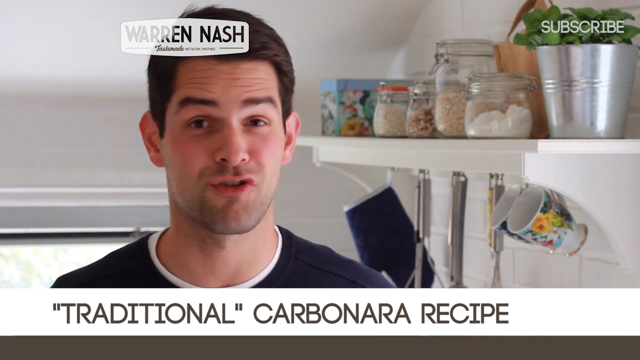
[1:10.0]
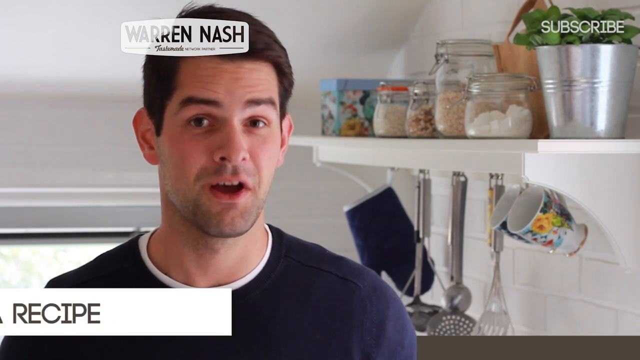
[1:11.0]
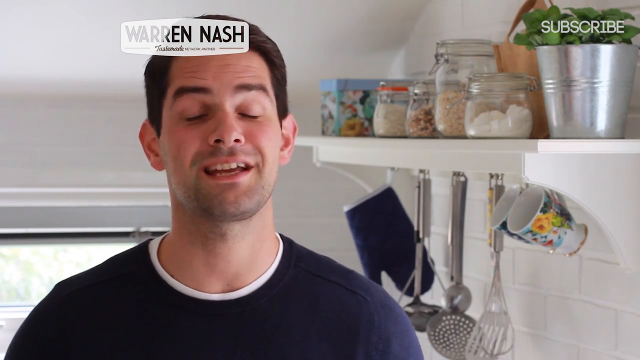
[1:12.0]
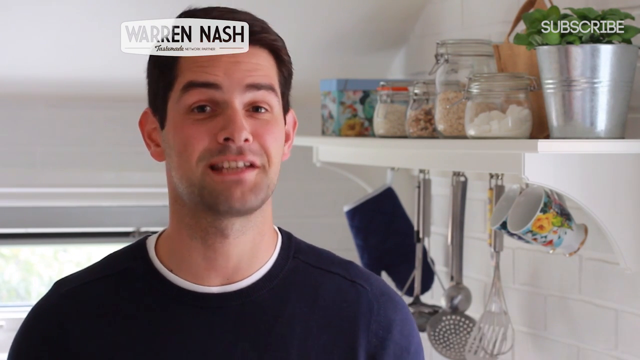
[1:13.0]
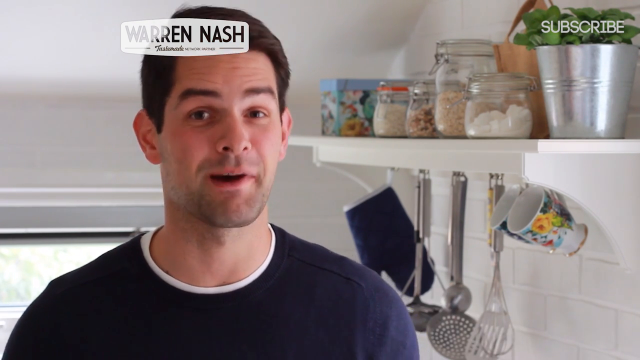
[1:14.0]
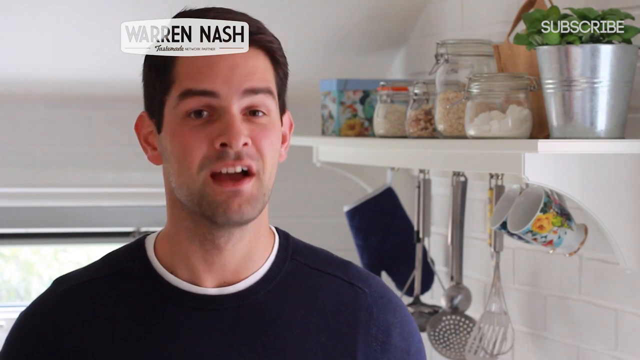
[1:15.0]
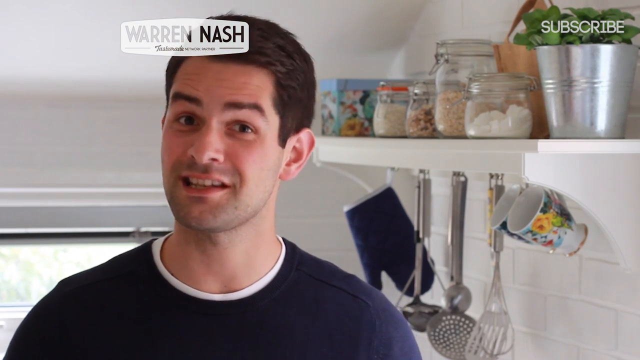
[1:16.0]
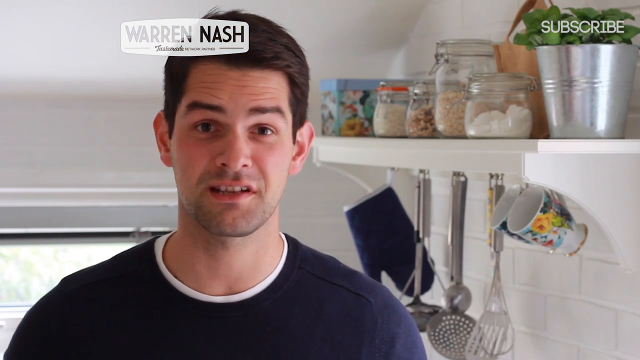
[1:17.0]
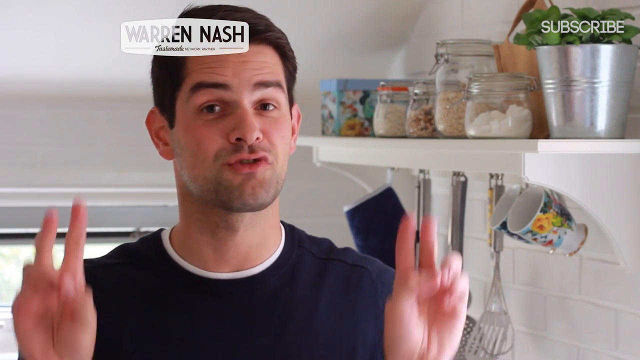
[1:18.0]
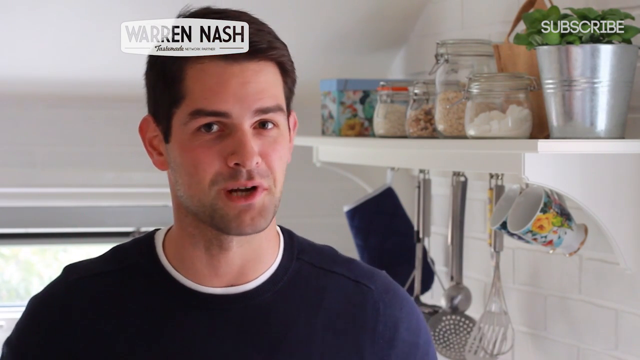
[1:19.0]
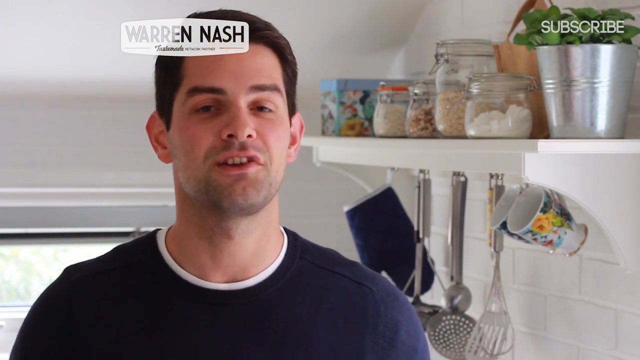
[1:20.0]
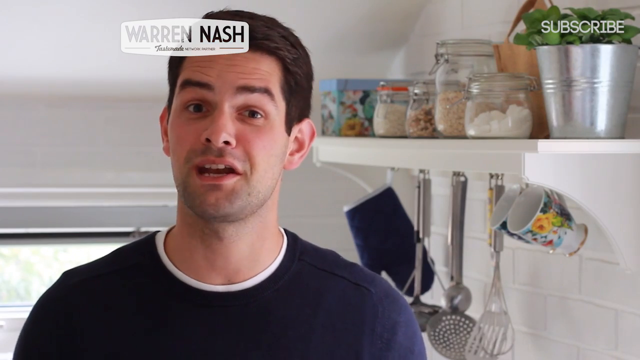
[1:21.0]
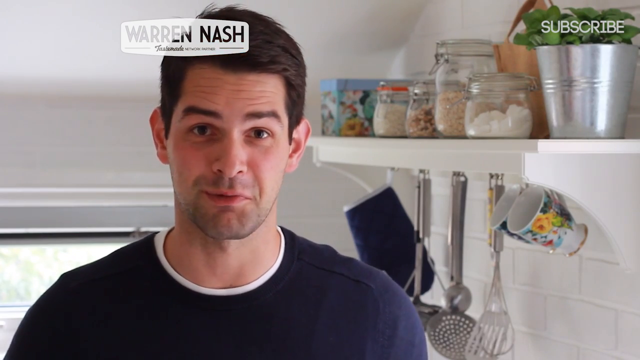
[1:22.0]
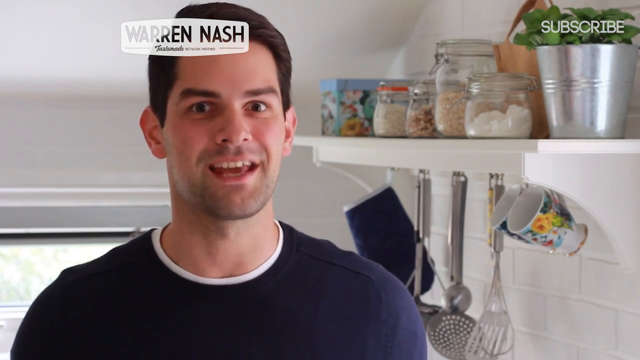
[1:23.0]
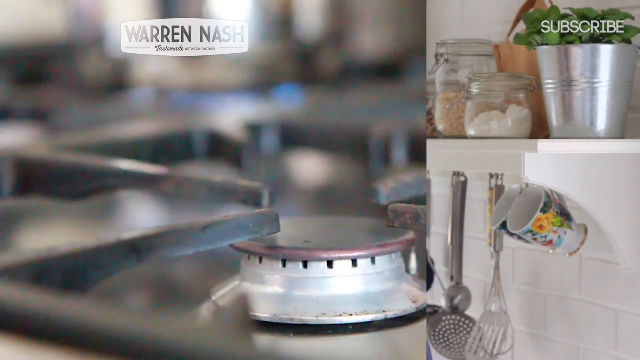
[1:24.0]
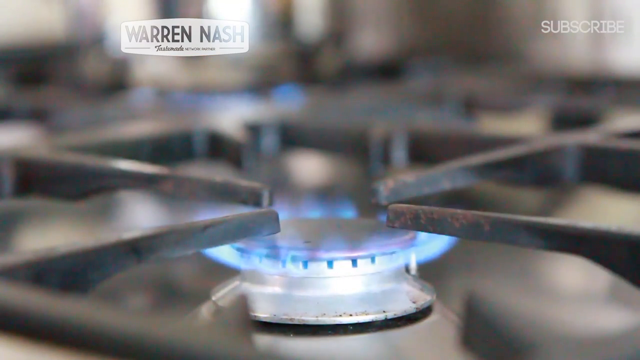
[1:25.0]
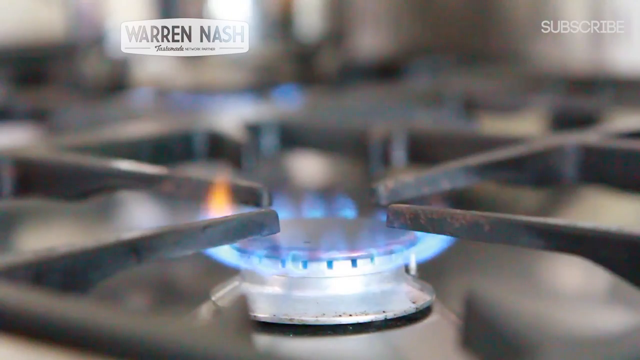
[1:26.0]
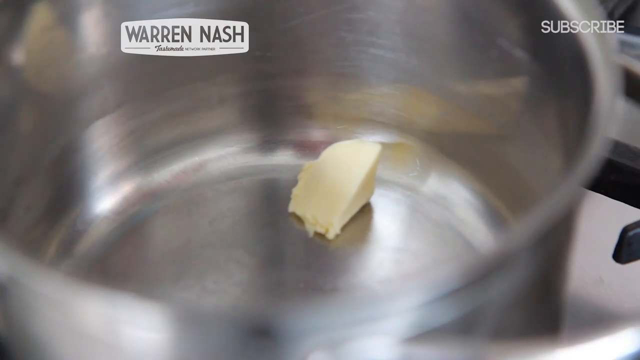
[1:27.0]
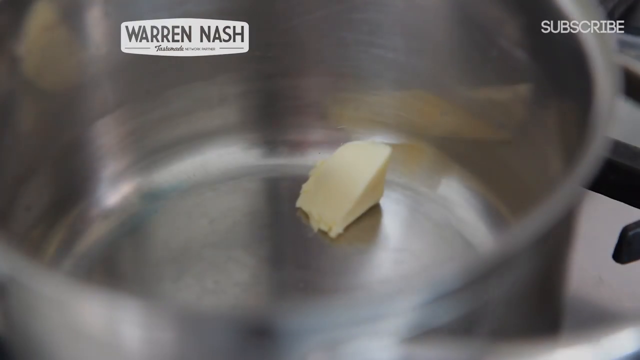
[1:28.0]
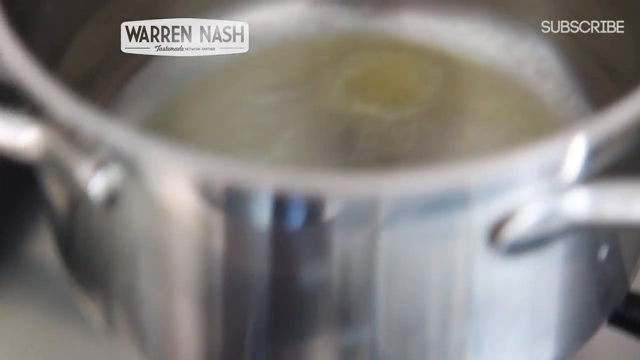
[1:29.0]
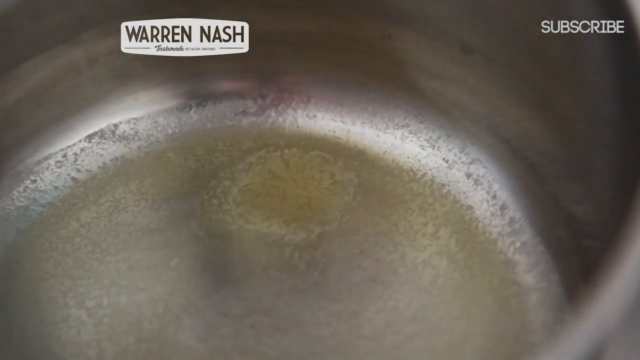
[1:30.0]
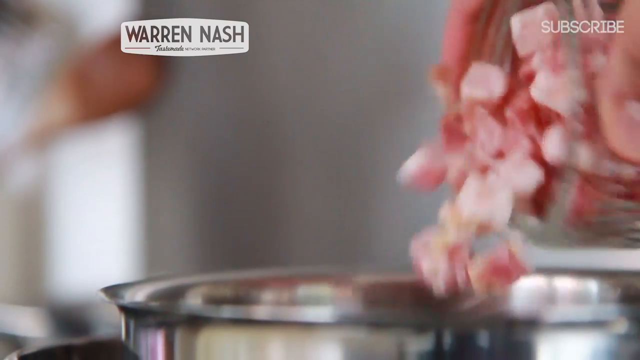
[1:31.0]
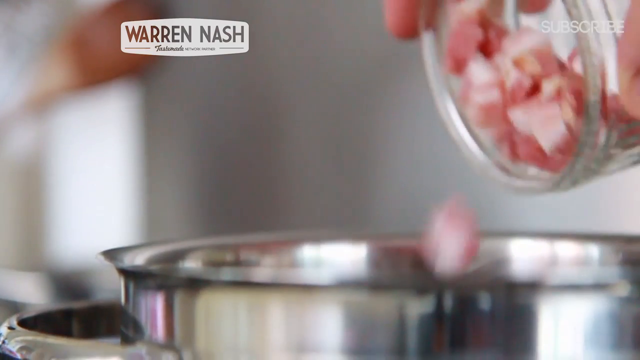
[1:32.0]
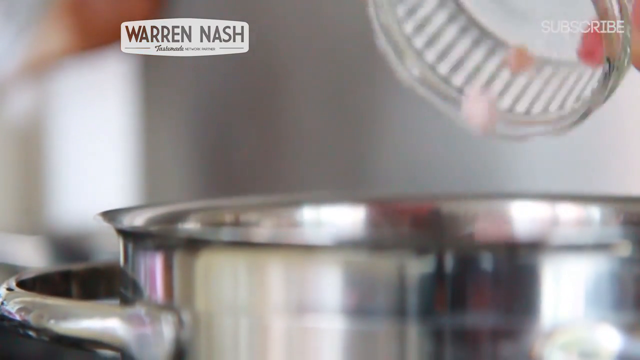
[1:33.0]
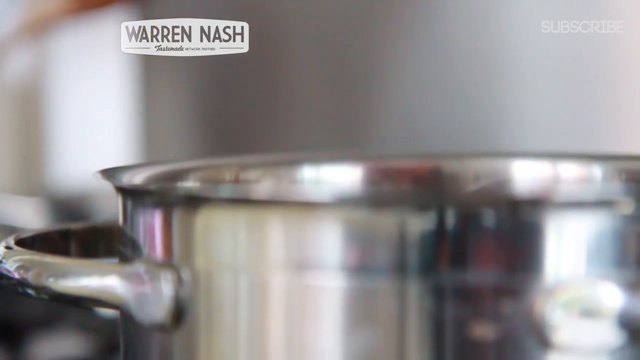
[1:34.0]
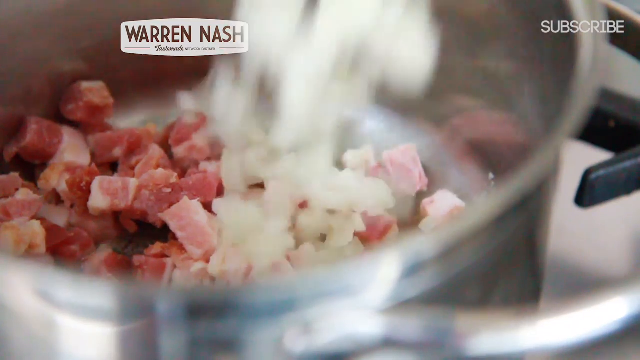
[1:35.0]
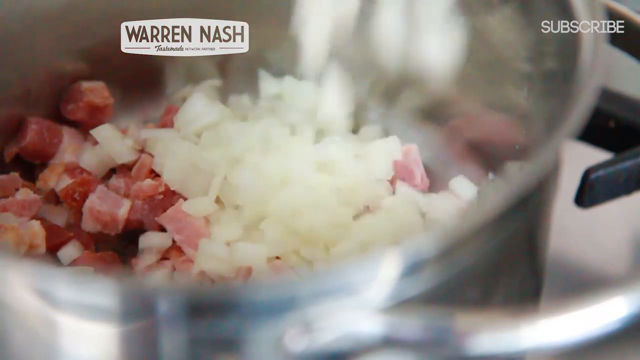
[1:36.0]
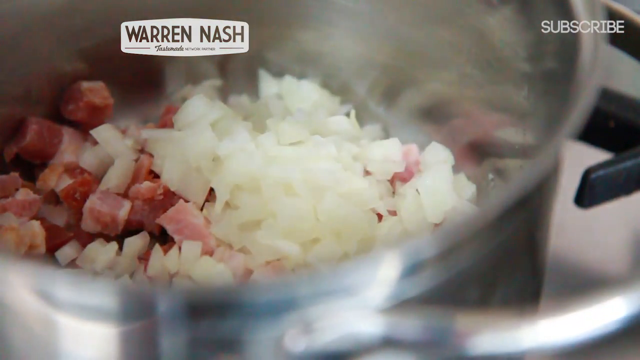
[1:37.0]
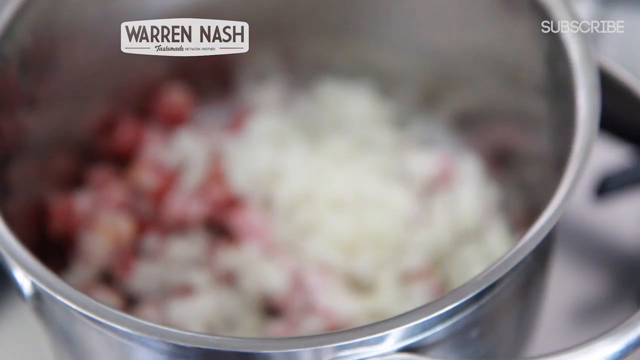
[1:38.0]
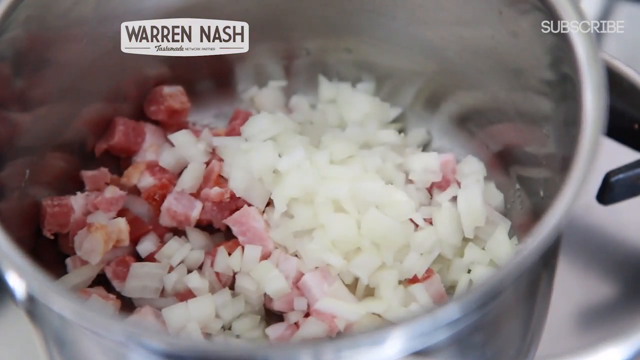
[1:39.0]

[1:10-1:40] Warren is about to prepare the Italian spaghetti and says a few words before starting. He wears a dark t-shirt with a white strap at the neck. He is in his home kitchen, with cupboards right behind him. Behind him, cooking spoons are hanging, and there are some containers holding dry ingredients, as well as a cup. He lights his gas stove, puts his pot on it, and adds butter, melting it. He then adds finely chopped bacon to the melted butter, followed by finely chopped onions, and is about to start frying and stirring the ingredients together.